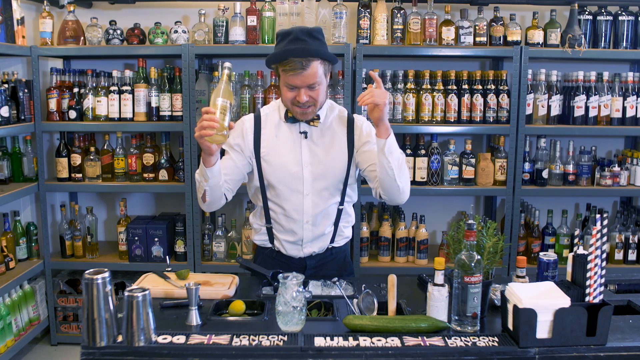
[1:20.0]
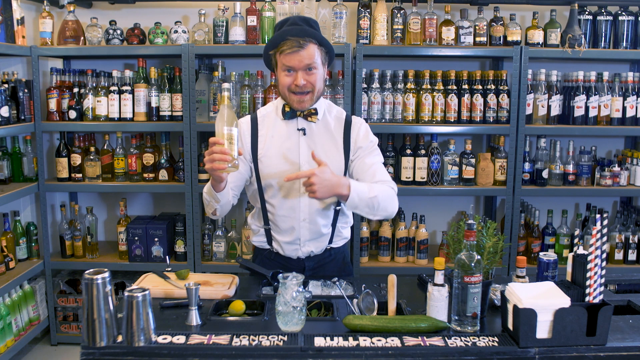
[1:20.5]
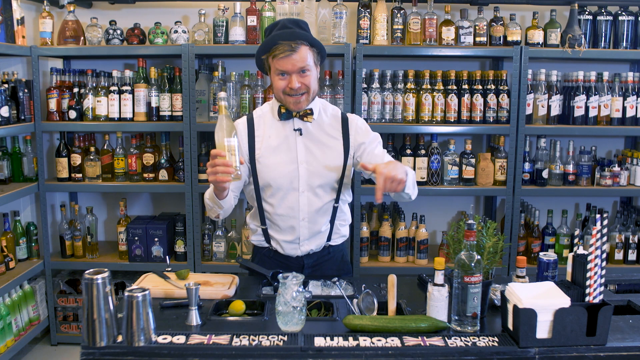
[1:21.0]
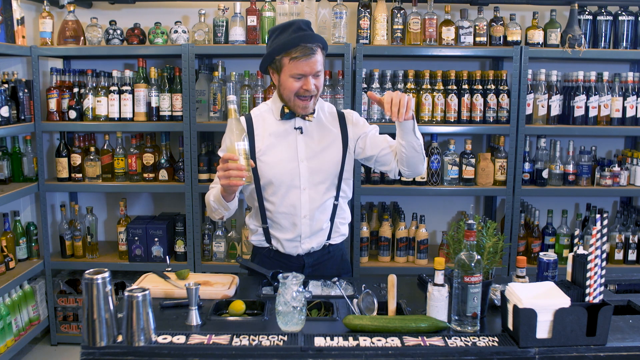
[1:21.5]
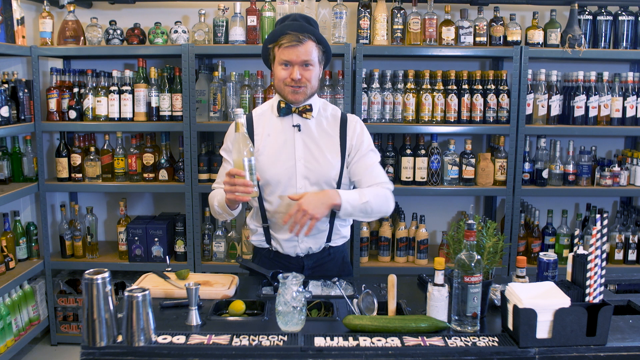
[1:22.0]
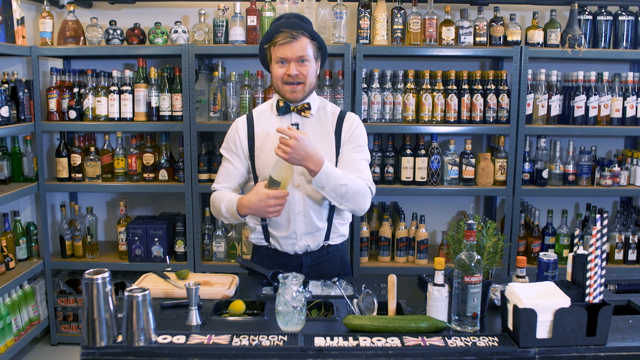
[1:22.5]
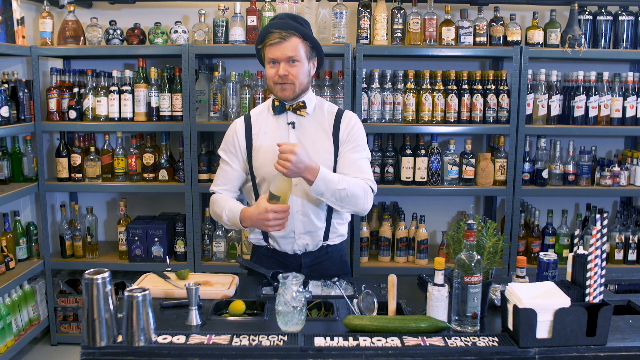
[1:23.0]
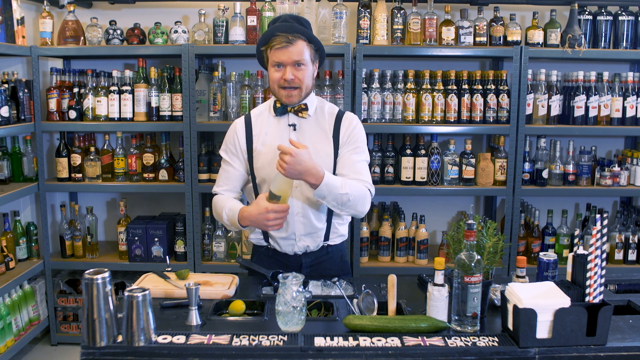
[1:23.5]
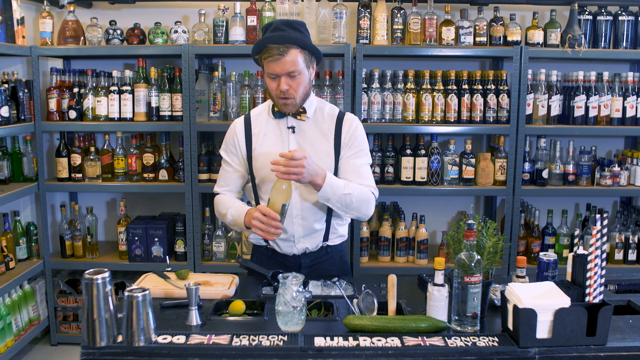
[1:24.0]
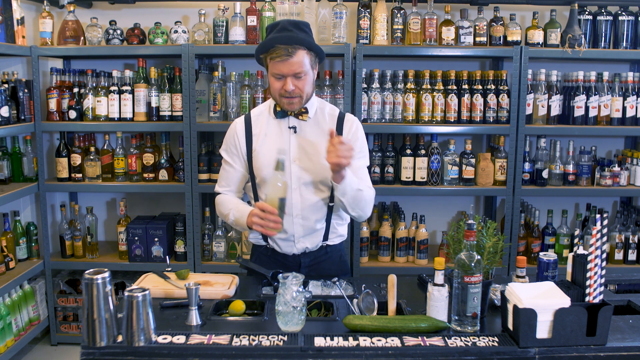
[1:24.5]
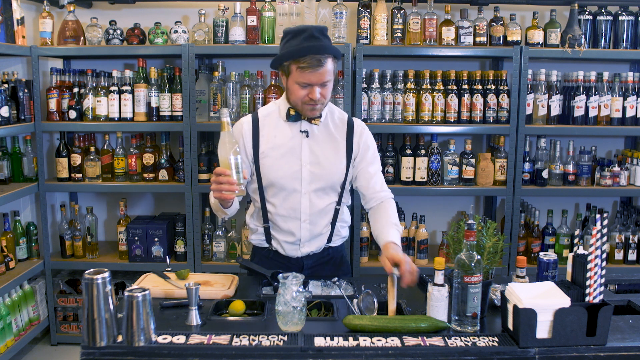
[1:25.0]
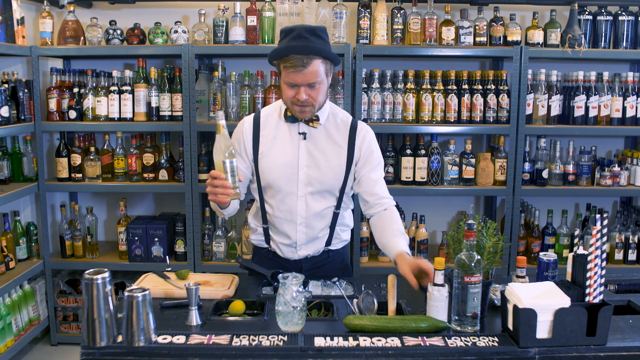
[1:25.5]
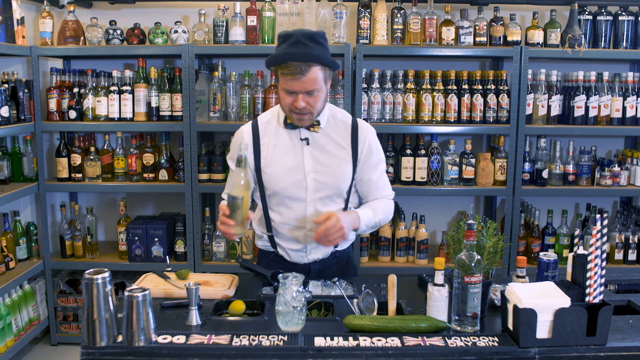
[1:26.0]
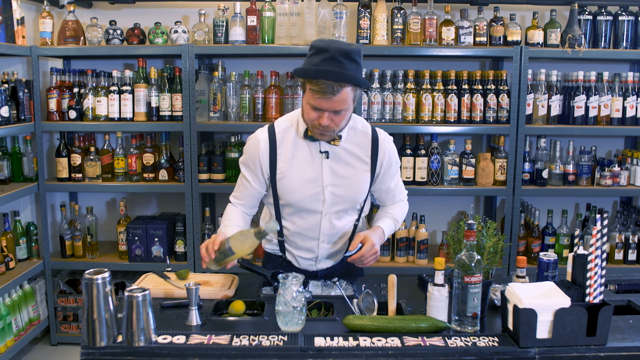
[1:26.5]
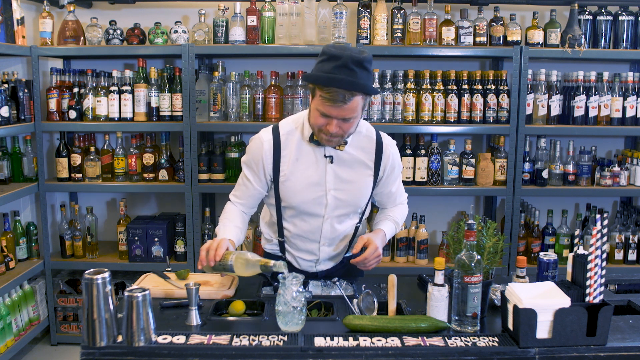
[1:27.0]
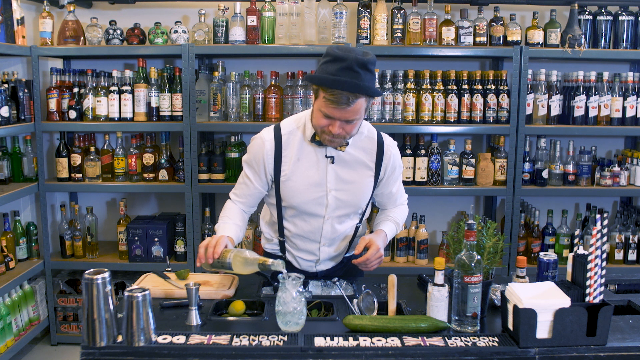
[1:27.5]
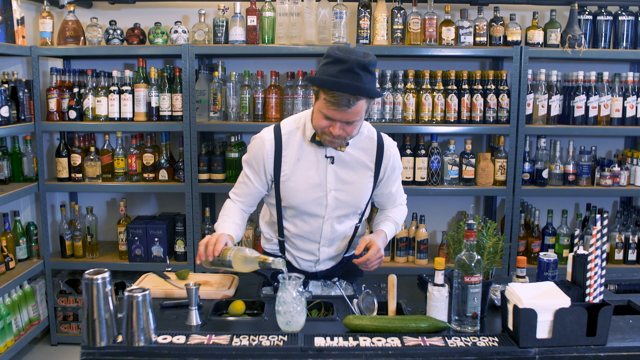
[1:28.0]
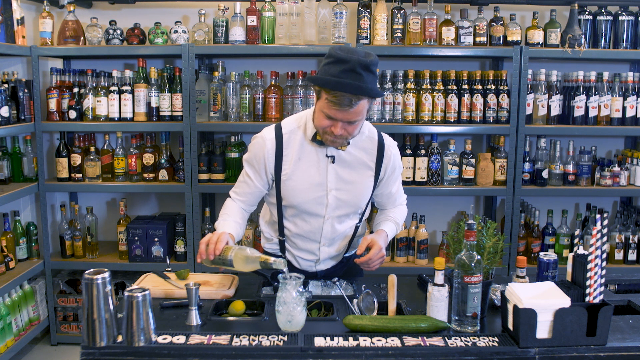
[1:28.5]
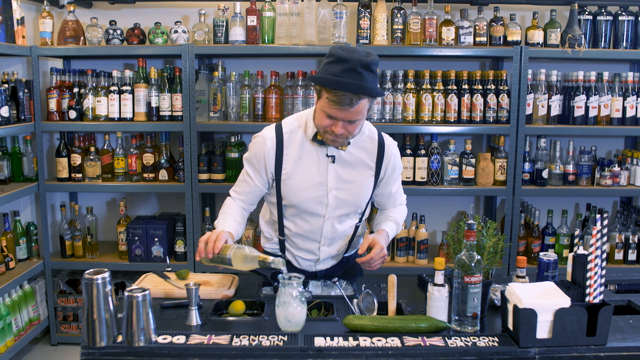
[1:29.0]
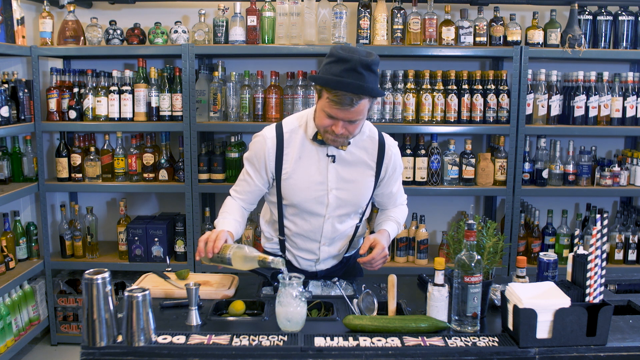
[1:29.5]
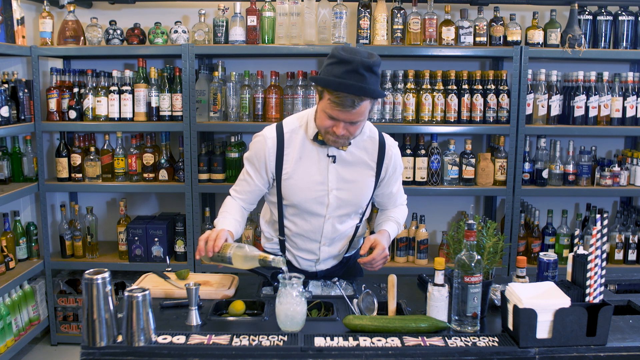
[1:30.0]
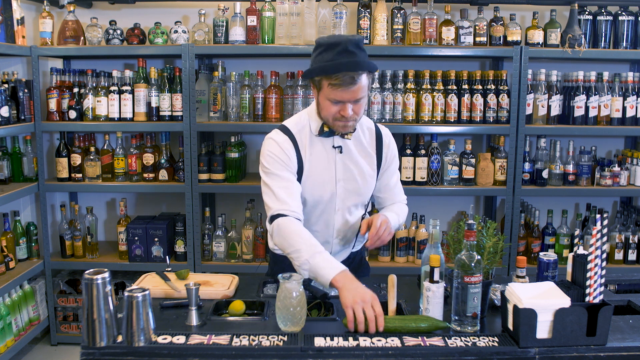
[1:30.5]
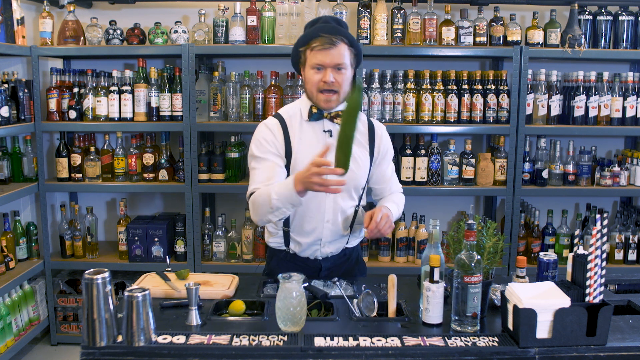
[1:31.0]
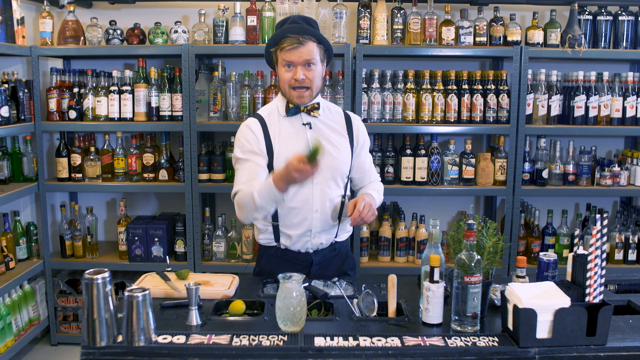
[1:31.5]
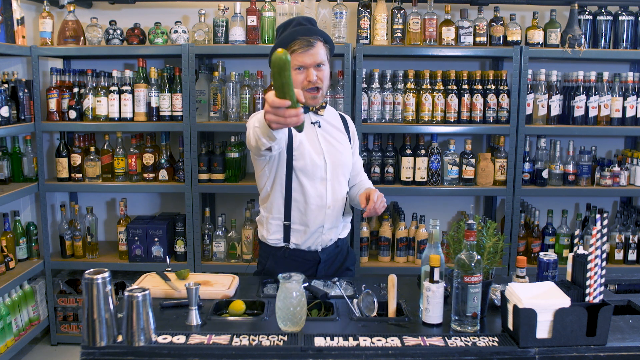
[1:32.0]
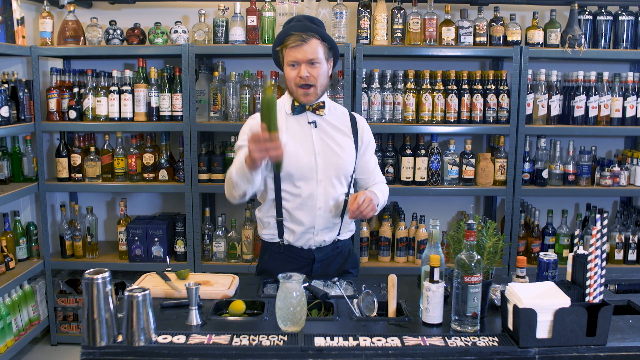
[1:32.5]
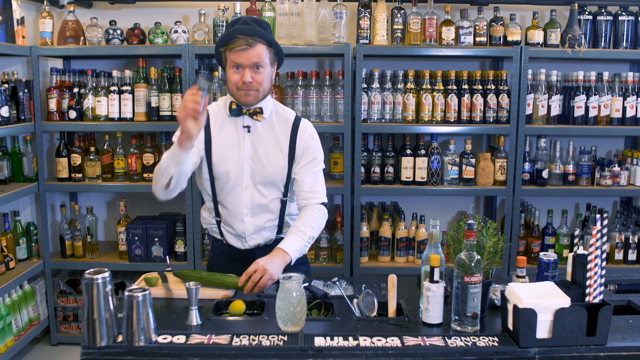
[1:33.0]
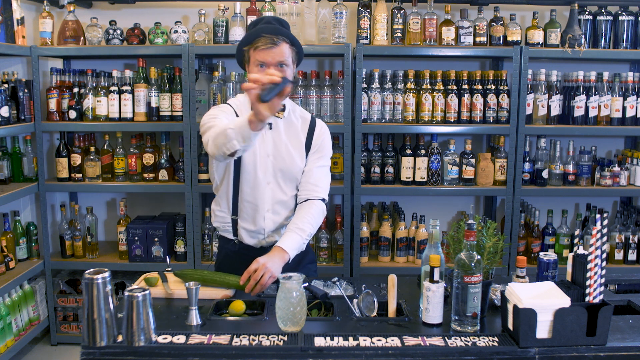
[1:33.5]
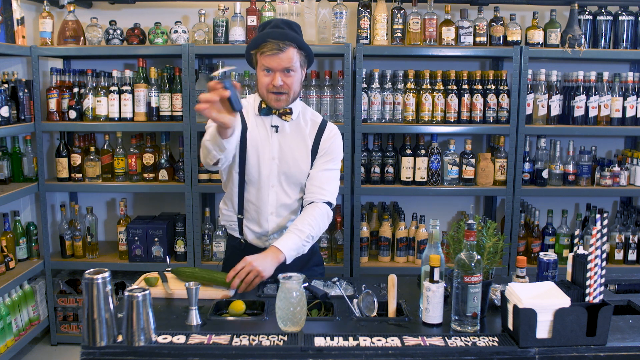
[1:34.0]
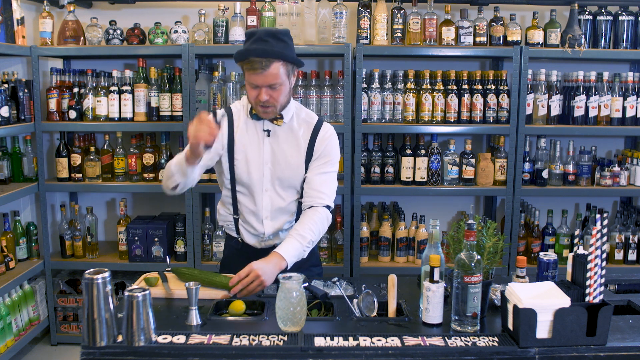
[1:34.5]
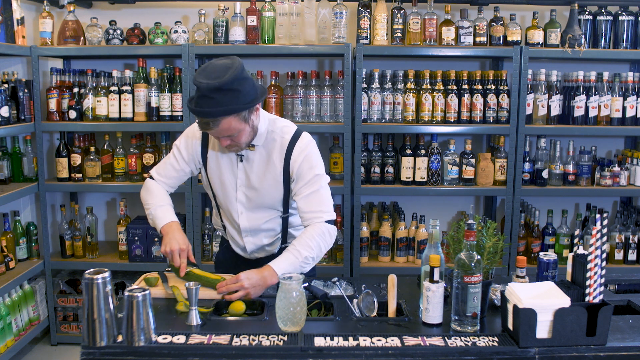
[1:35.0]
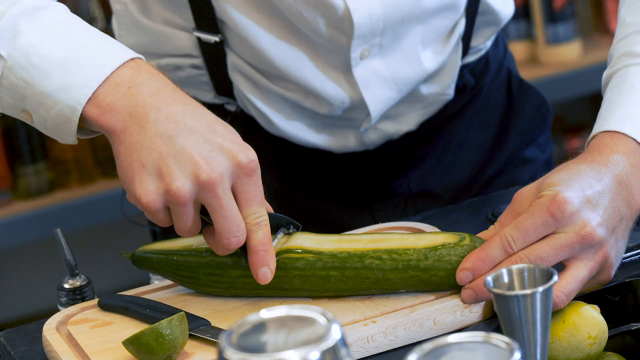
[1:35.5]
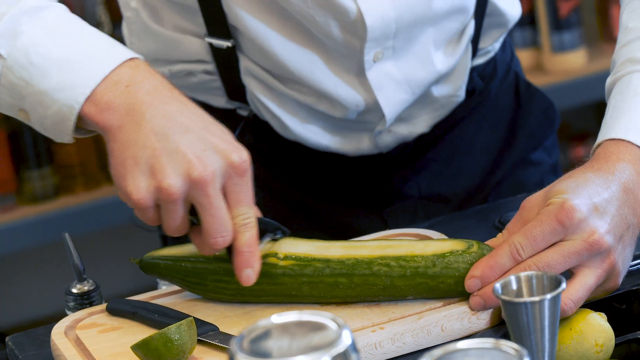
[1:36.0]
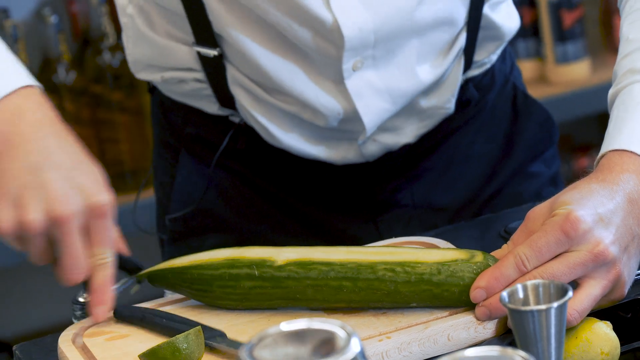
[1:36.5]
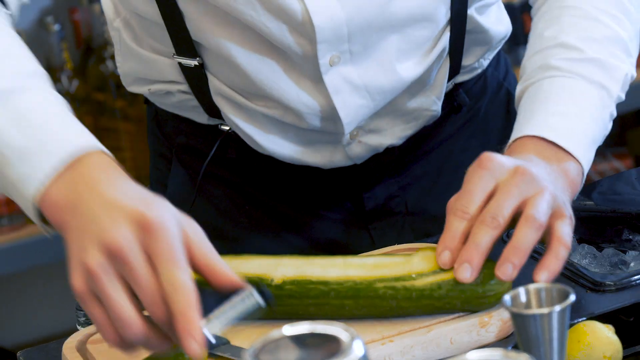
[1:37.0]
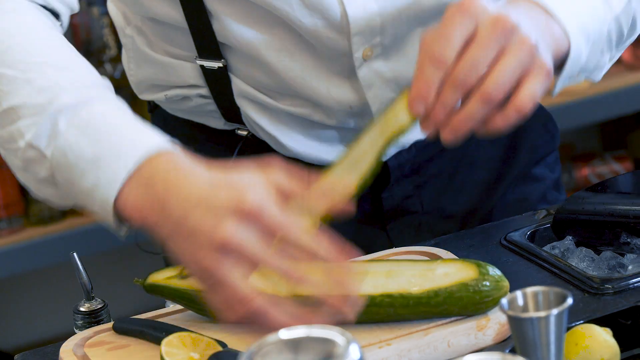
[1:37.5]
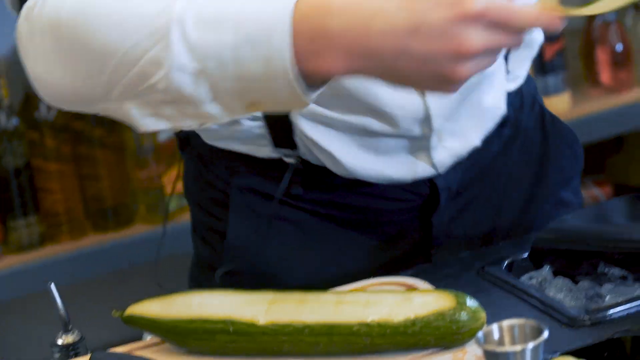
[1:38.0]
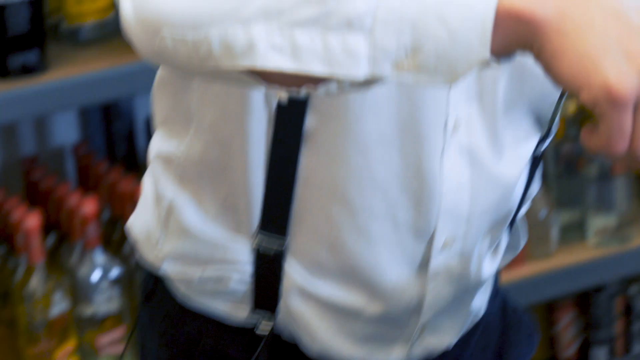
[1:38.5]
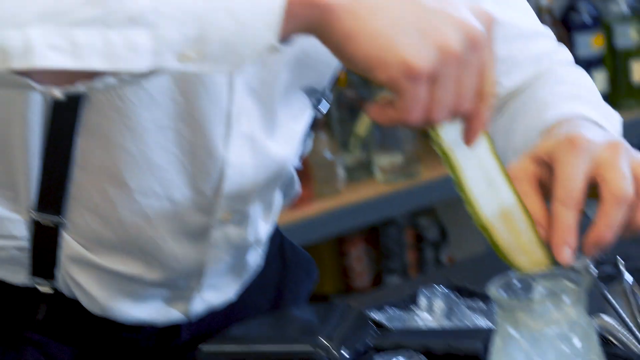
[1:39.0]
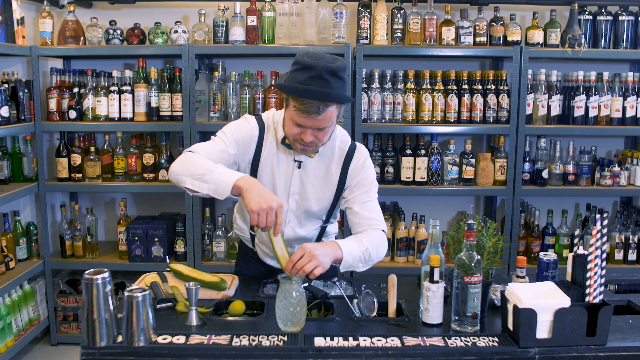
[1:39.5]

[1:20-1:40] Still holding the ginger beer, Rasmus unwraps the cover with one hand while holding the bottom of the bottle, then pours the ginger beer directly into the pineapple-shaped glass cup. He grabs the cucumber, flips it and points it at the screen. With a slicer he peels the back of the cucumber, places it on the chopping board and slices it, peeling off the green skin, then peels off a slice of cucumber and places it in the cup. A large chunk of cucumber remains on the chopping board. Various items are on the black table, including the inscribed Union Jack flag with "London dry gin" written next to it, and a lemon inside a tray.